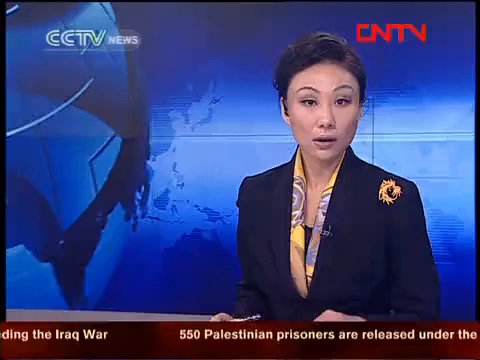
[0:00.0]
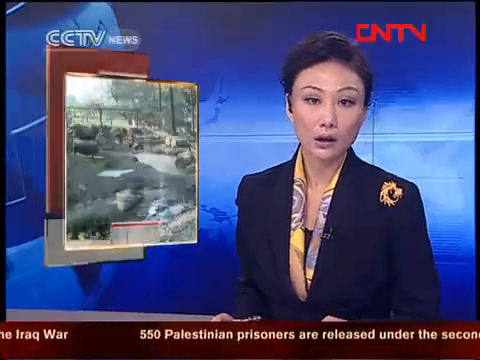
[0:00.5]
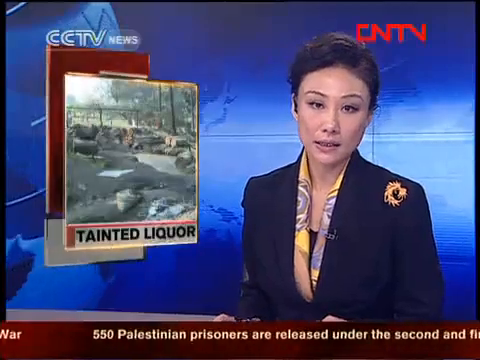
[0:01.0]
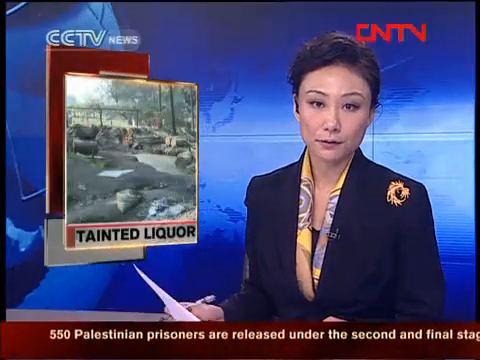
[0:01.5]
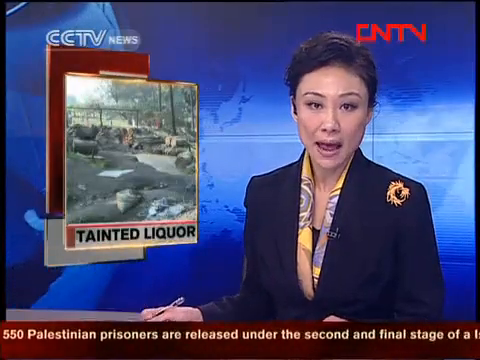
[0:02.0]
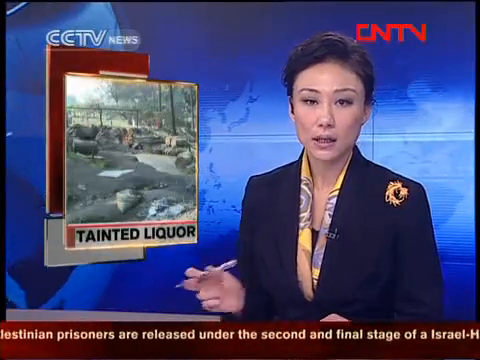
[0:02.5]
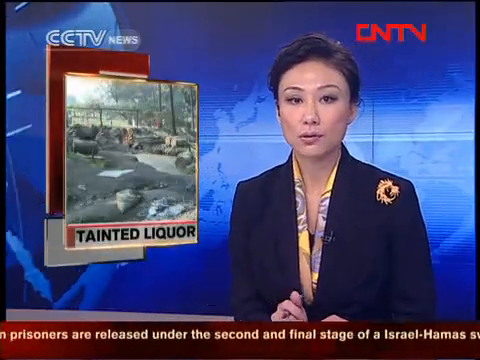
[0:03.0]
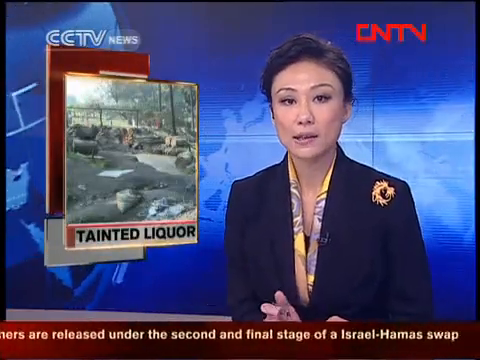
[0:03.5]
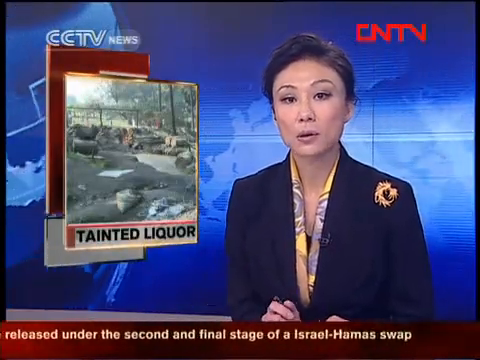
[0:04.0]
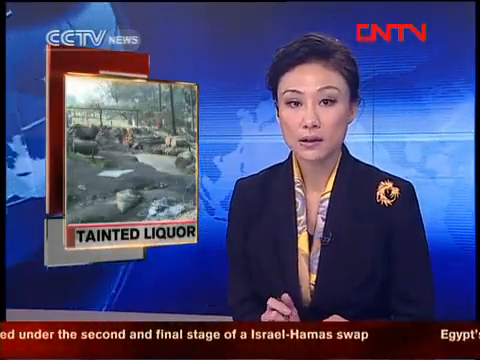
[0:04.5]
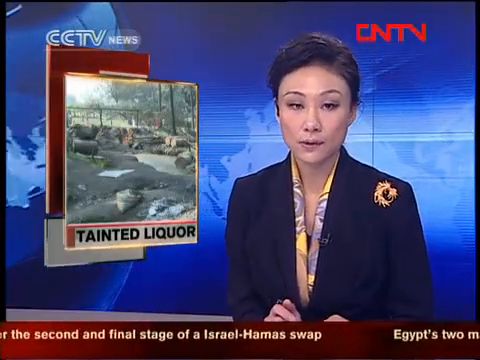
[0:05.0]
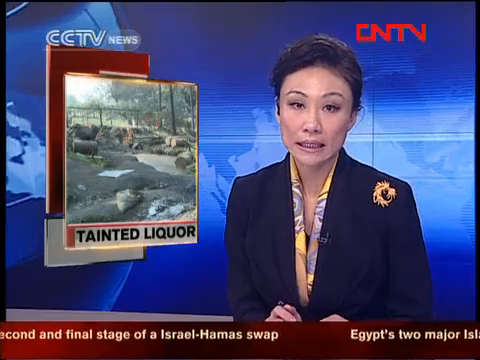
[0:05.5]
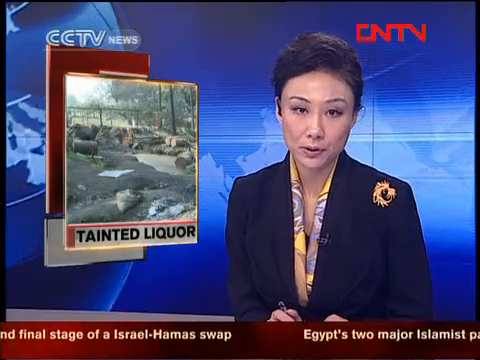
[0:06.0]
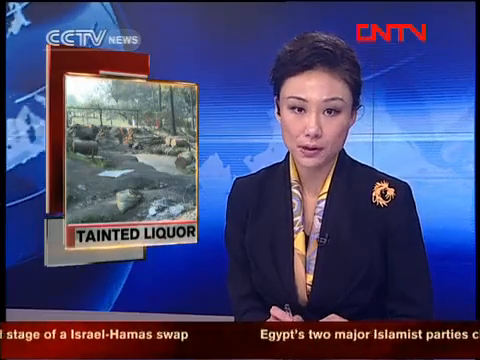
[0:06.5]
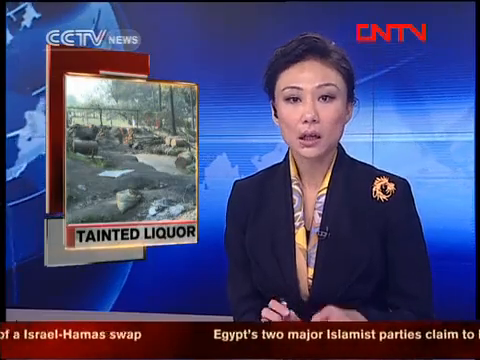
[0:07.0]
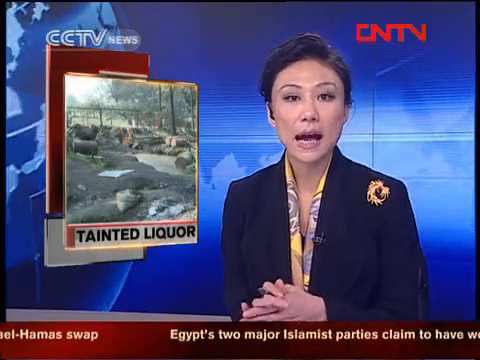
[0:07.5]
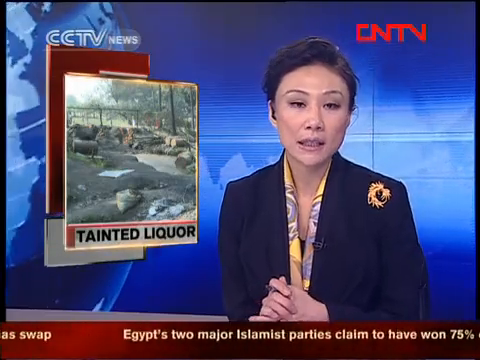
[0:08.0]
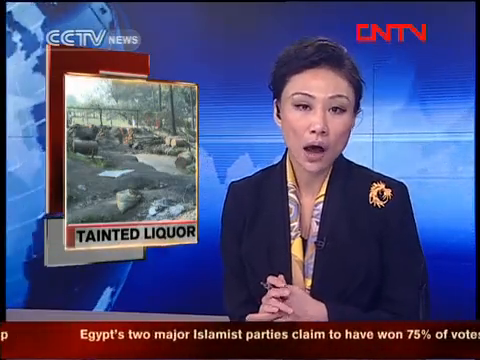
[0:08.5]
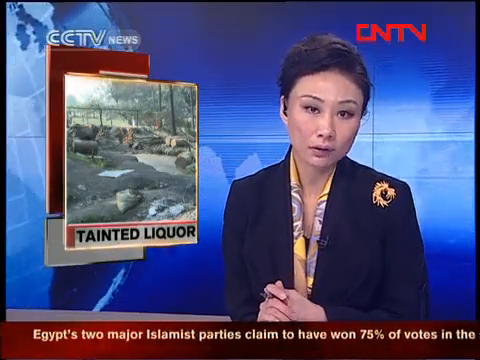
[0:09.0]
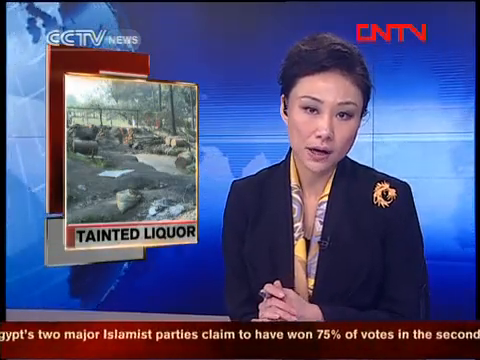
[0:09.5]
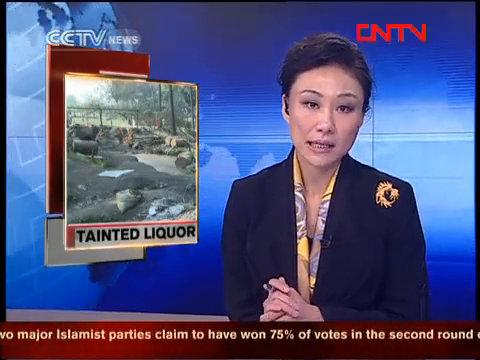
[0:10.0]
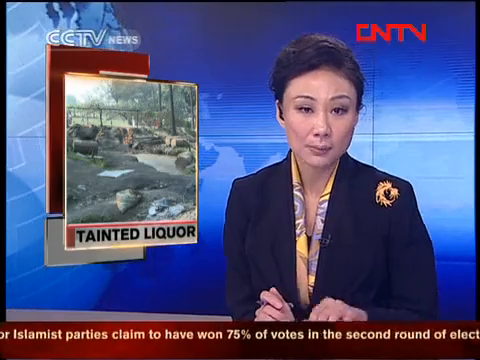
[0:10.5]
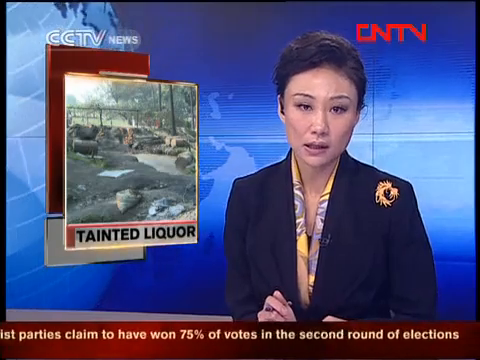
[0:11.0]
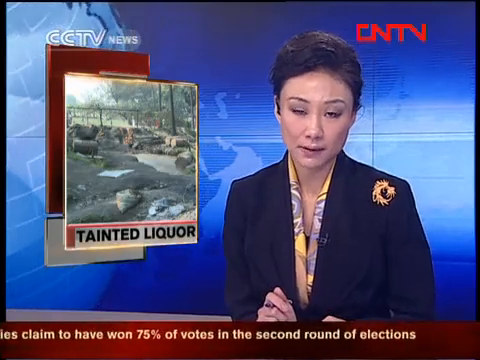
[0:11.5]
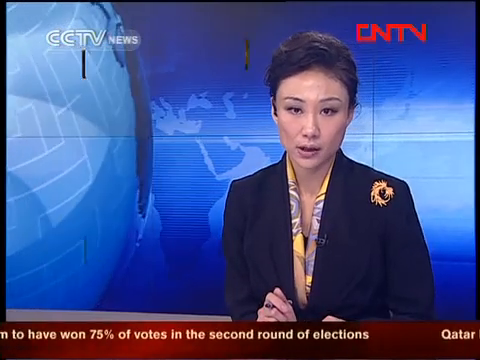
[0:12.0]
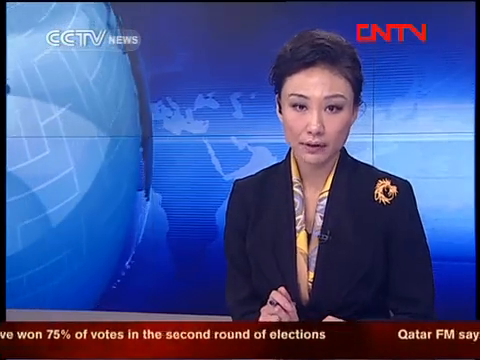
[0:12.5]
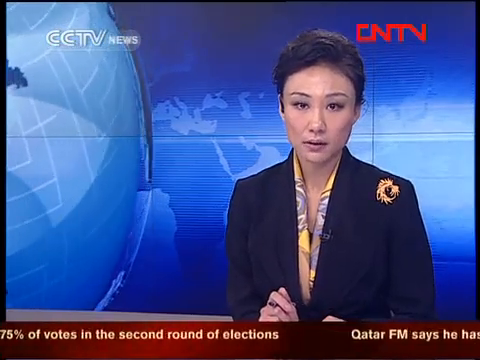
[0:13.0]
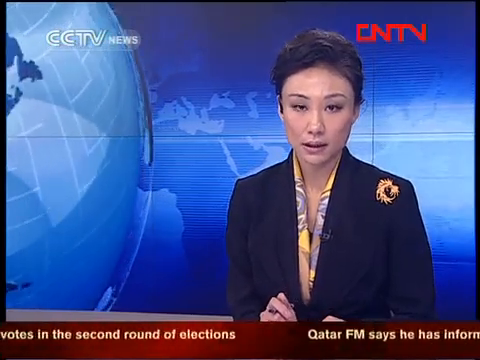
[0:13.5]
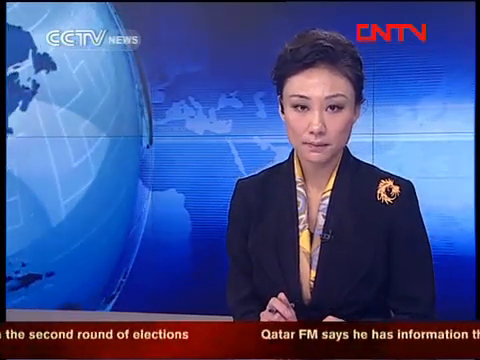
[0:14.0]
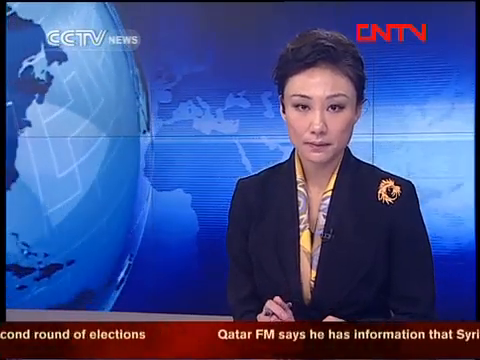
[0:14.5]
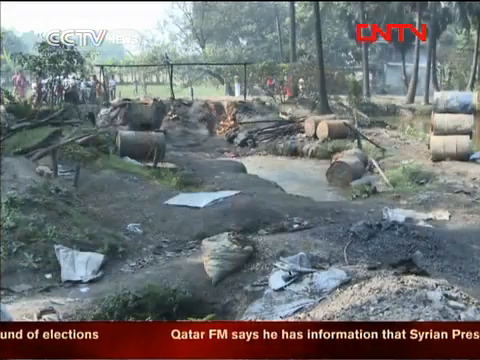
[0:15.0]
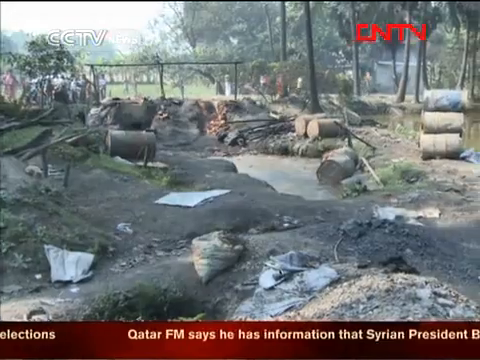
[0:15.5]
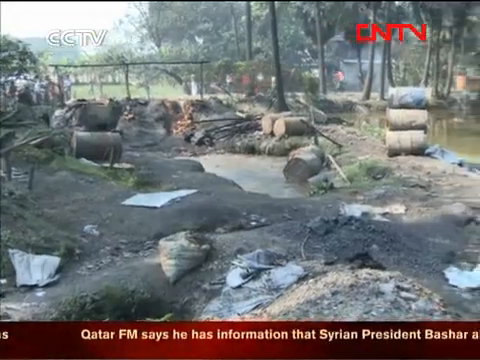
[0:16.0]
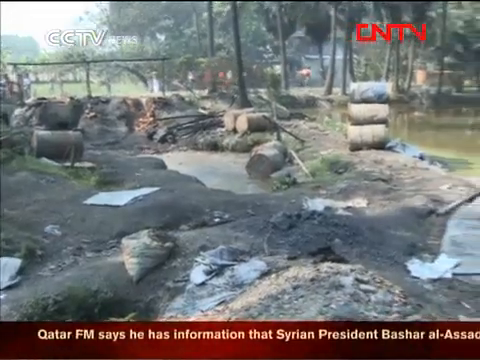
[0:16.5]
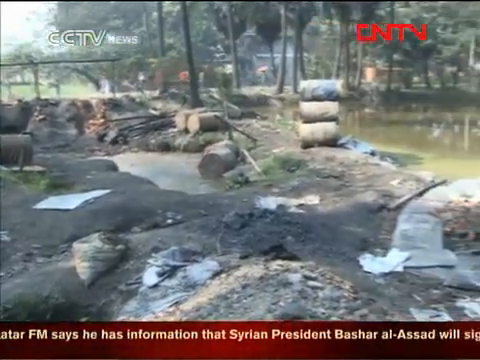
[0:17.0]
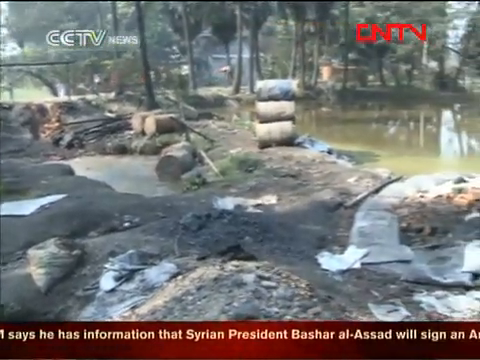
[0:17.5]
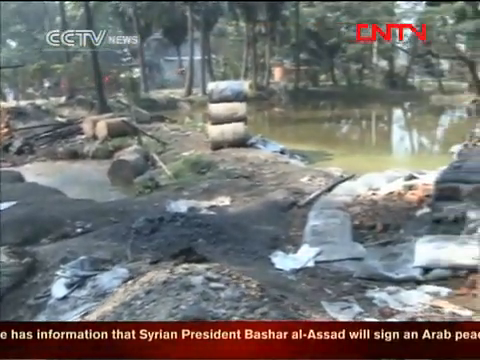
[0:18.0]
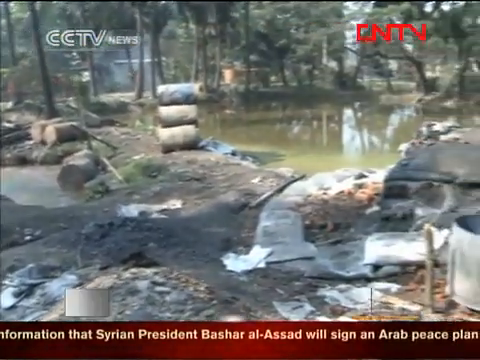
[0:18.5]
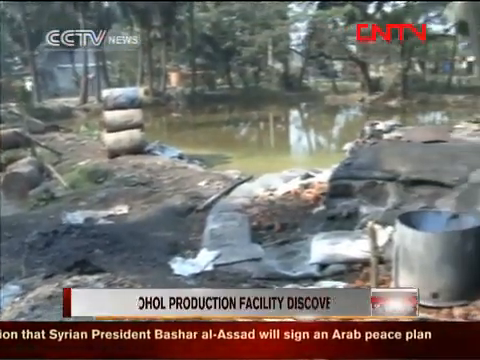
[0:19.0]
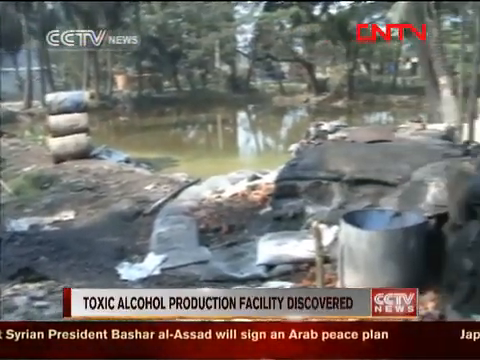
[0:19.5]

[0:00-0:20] The video is from CN TV, part of CCTV News, and its topic is tainted liquor. The news anchor is an Asian woman wearing a black blazer over a multicolored blouse, with a pin that looks like a brooch on her right shoulder and her hair in a bun. She introduces the segment, talking for a few seconds with her hands on the desk. The video then cuts to a field with some barrels and a small dumping area full of water, with a chyron below that reads "Toxic alcohol production facility discovered." There are many barrels and pools of water or liquid mixed with dirt and soil, and a few rocks in the area; the site looks very unsanitary and not really meant for alcohol production. A marquee at the bottom of the screen shows other, unrelated news, including items about Syrian president Bashar al-Assad and signing an Arab peace plan.